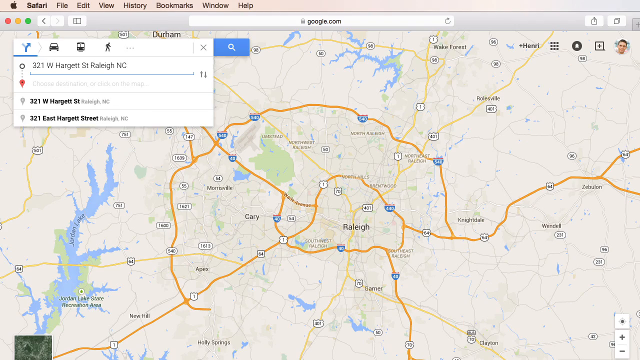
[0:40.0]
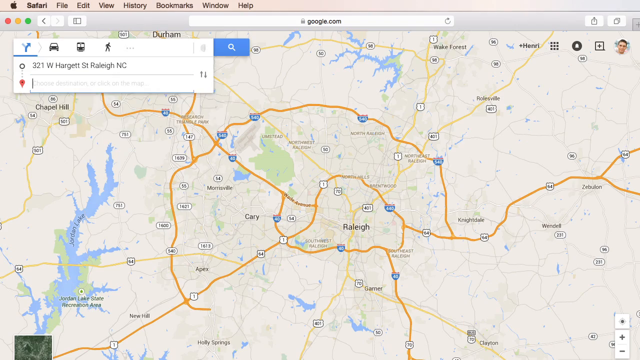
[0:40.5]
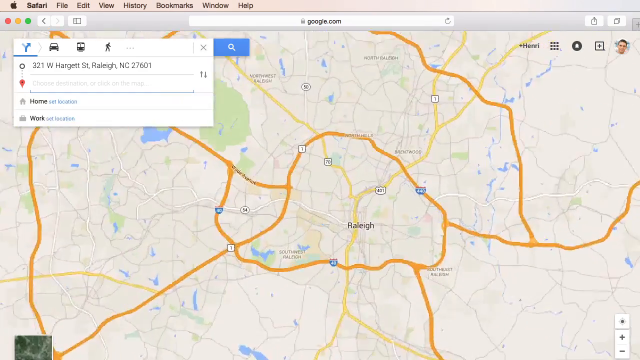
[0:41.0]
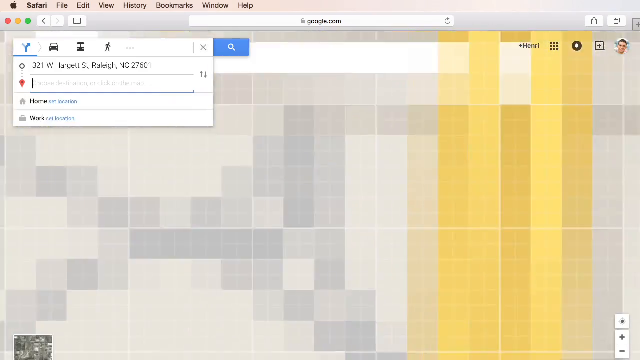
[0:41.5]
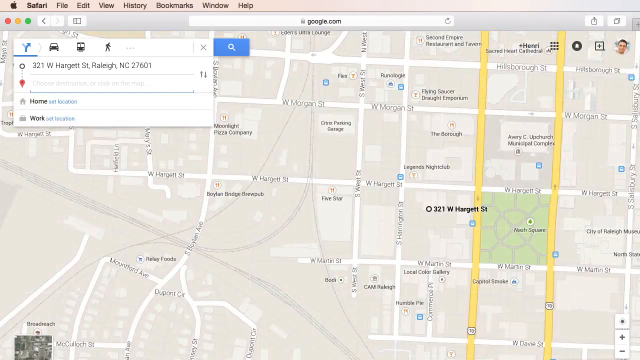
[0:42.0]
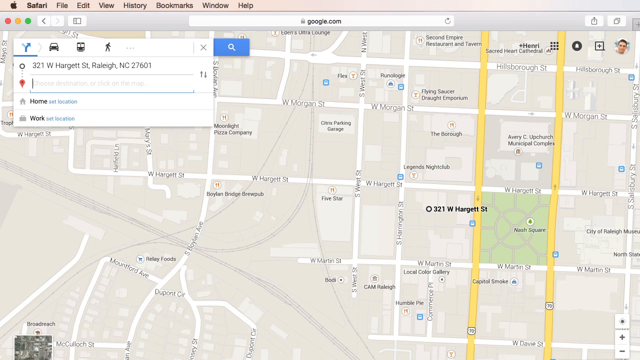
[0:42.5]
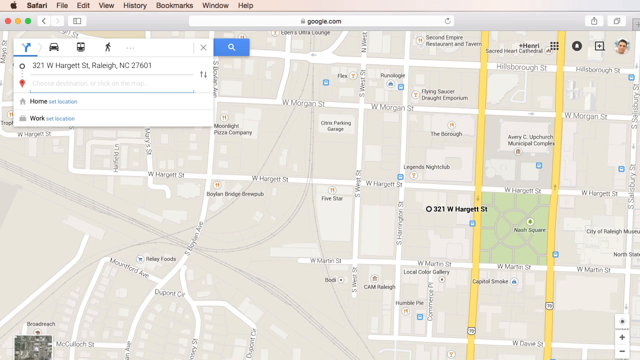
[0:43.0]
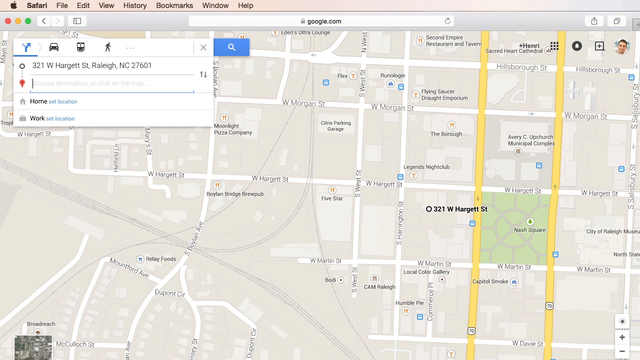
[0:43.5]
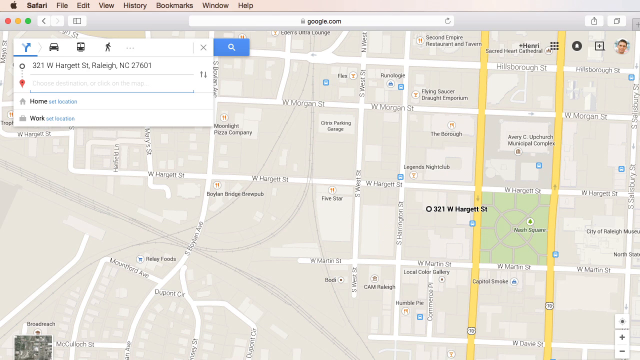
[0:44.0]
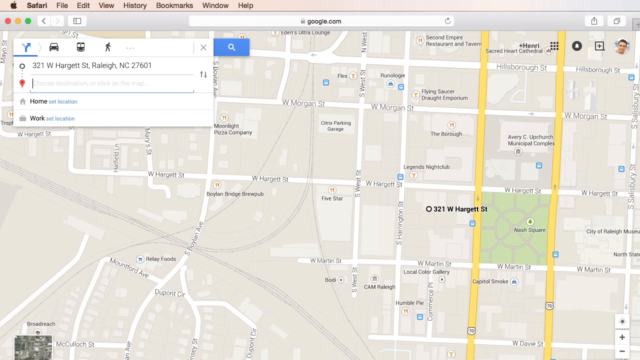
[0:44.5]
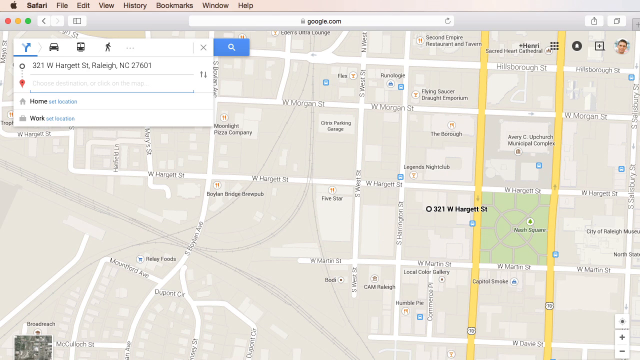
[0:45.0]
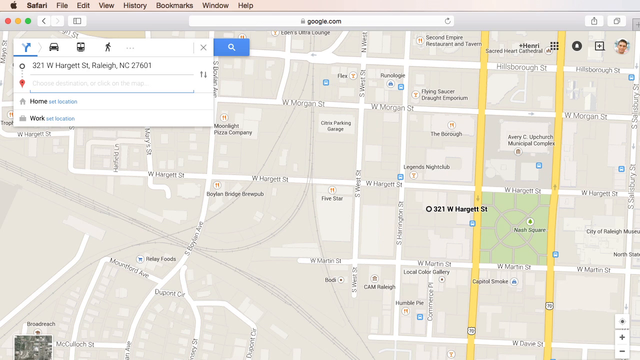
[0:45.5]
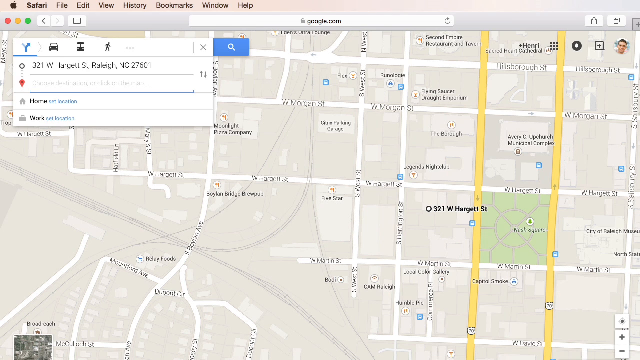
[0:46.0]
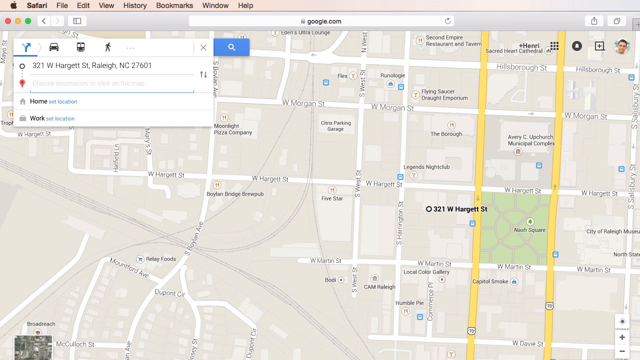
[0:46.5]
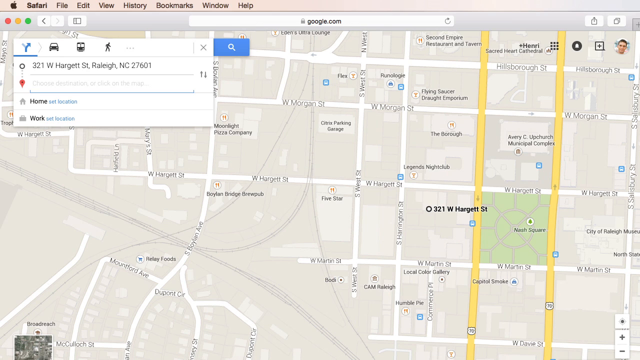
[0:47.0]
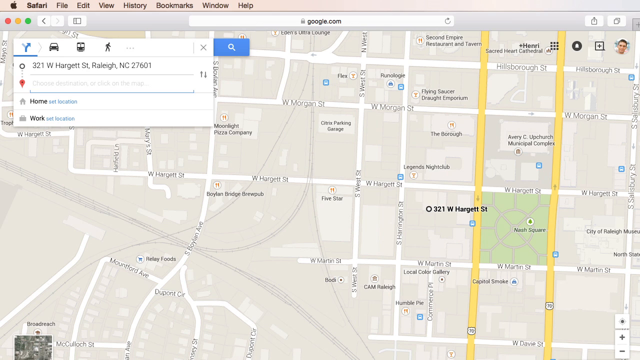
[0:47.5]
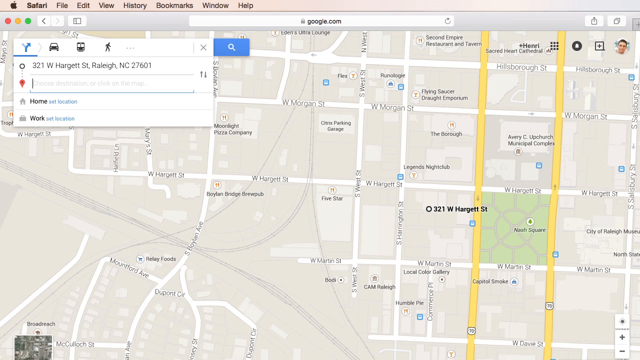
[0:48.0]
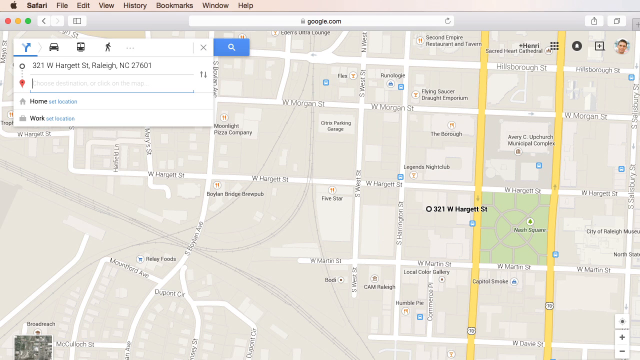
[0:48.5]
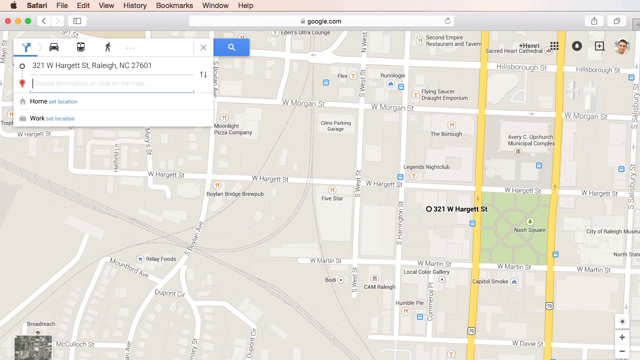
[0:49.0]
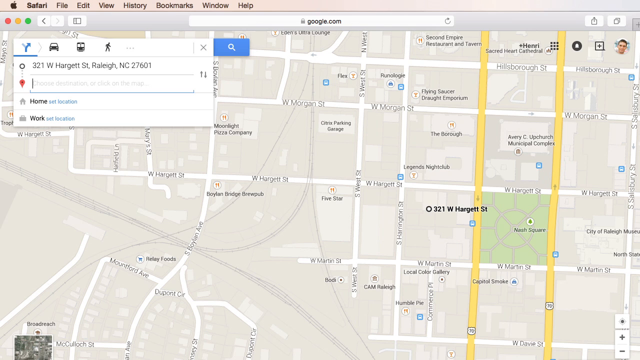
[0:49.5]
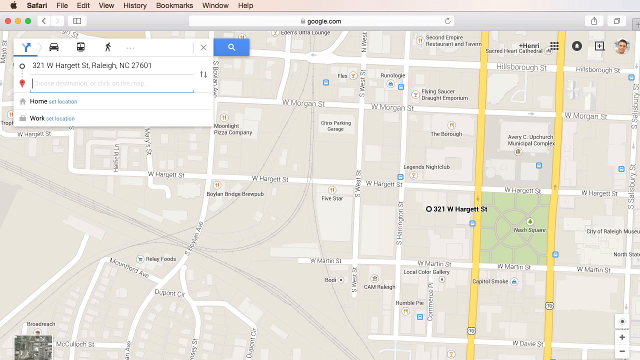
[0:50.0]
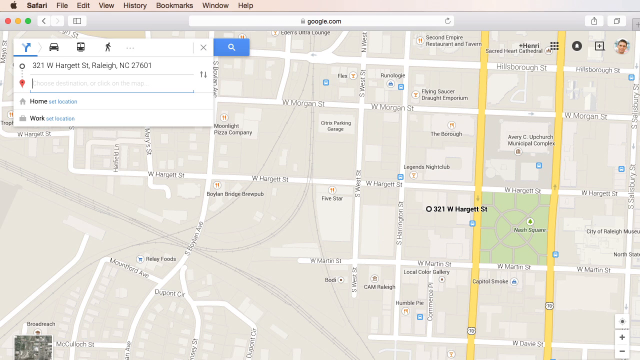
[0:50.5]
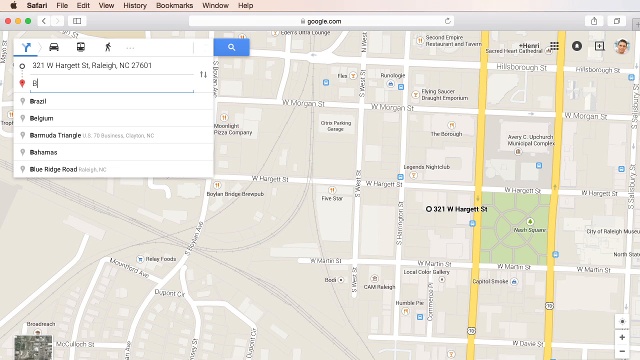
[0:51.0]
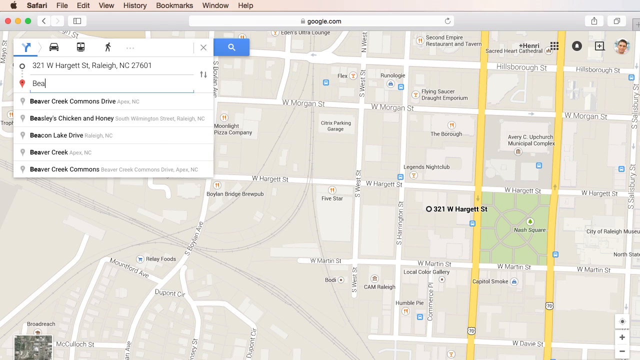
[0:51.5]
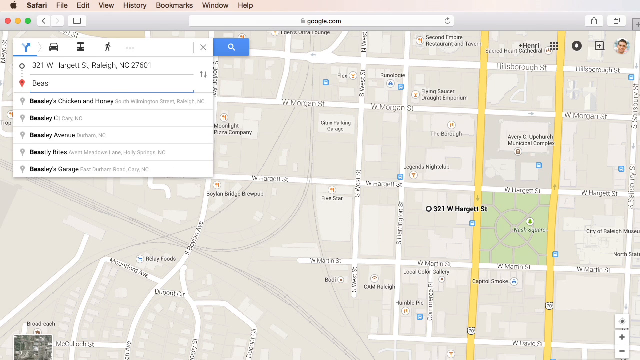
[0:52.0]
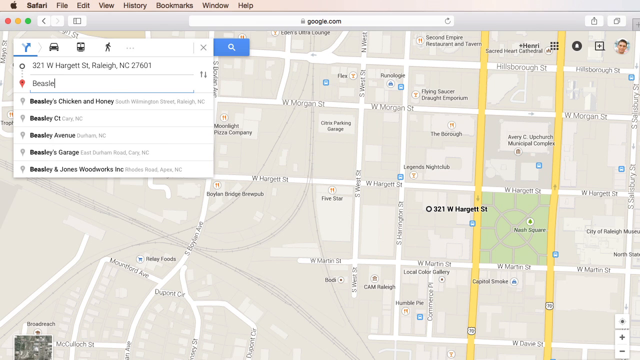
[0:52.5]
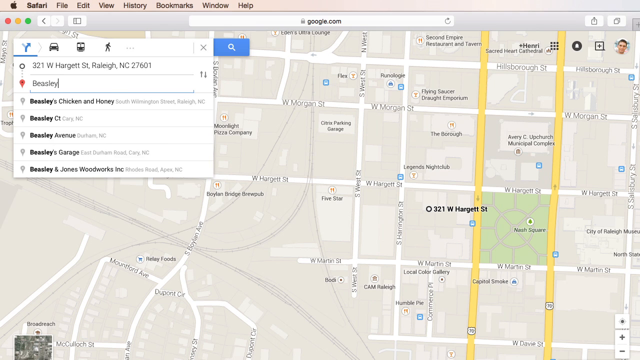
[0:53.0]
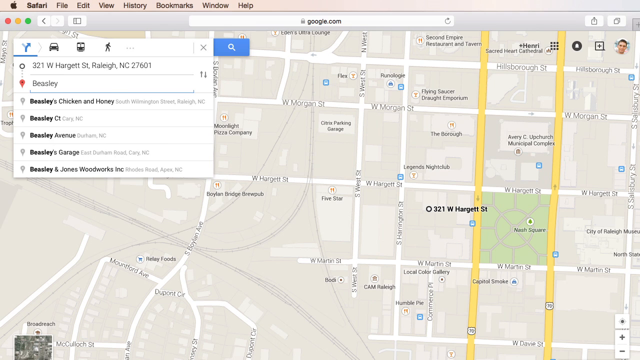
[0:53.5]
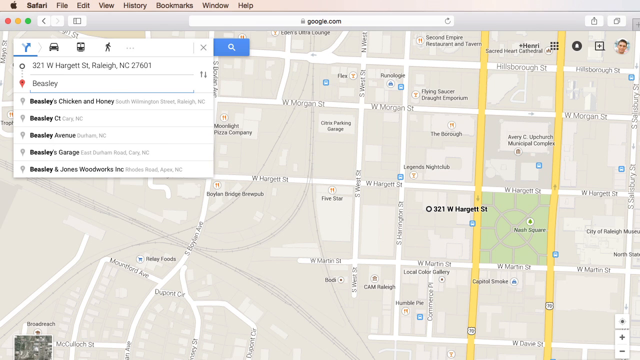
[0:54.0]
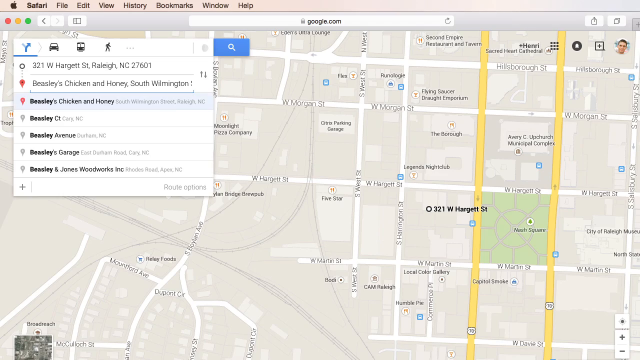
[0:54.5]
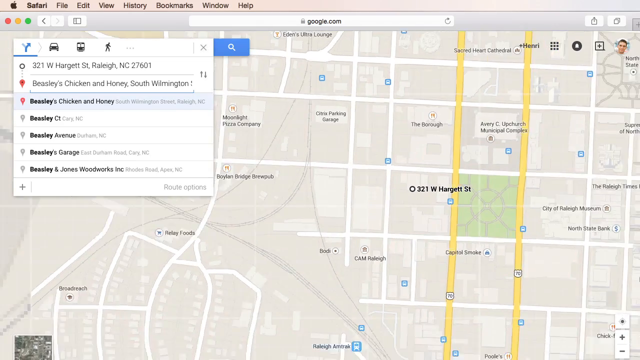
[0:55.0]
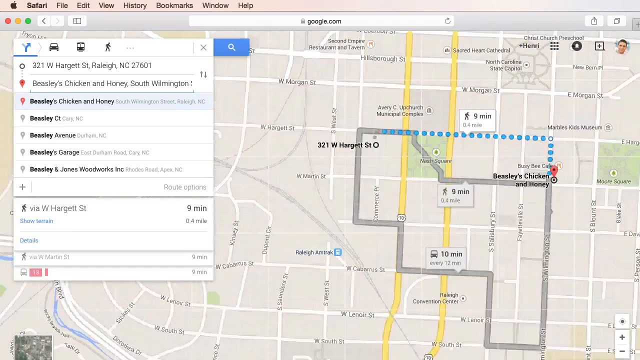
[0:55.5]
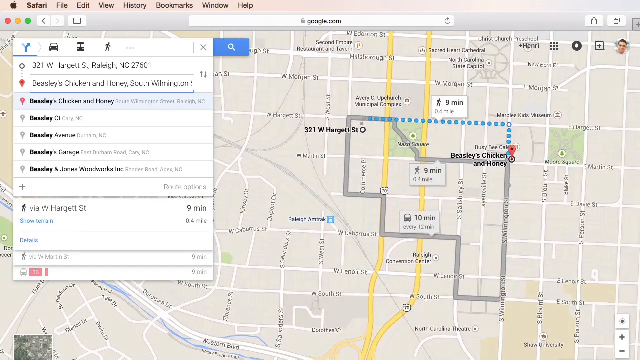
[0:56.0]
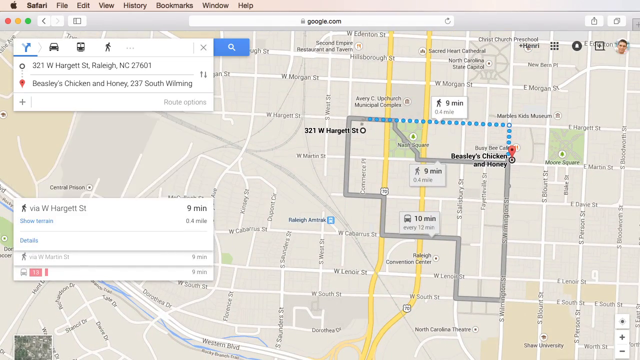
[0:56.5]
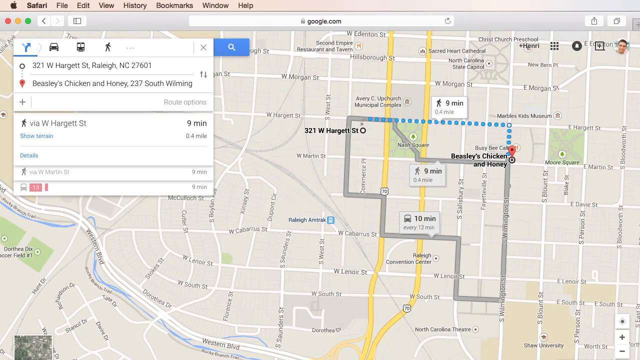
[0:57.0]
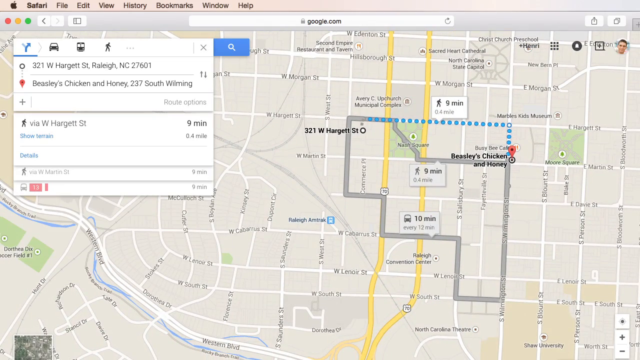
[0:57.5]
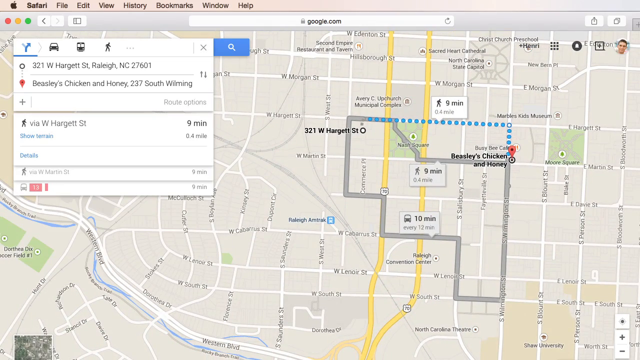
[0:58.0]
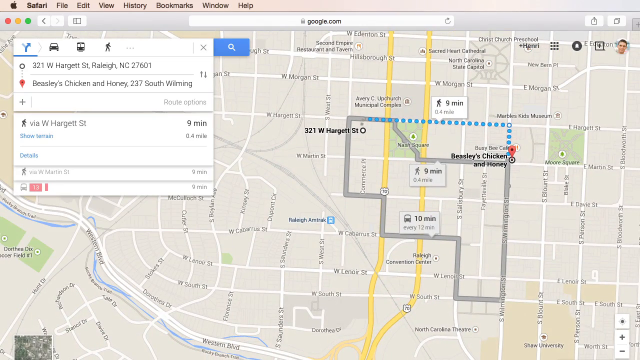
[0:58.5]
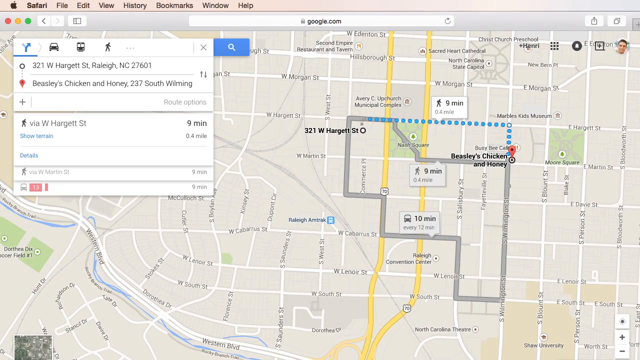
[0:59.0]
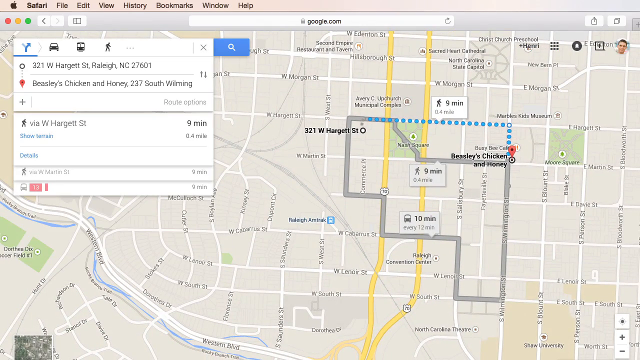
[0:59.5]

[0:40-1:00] The Google Maps screencast shows a map of Raleigh, North Carolina. The destination 321 West Hargrett Street in Raleigh, North Carolina has been typed into the getting around box, and the map zooms in on that street address. A second address, Beasley's Chicken and Honey in South Wilmington, North Carolina, is then typed in, producing directions from 321 West Hargrett Street to Beasley's Chicken and Honey. The map zooms in to show a dotted line path connecting the two locations.